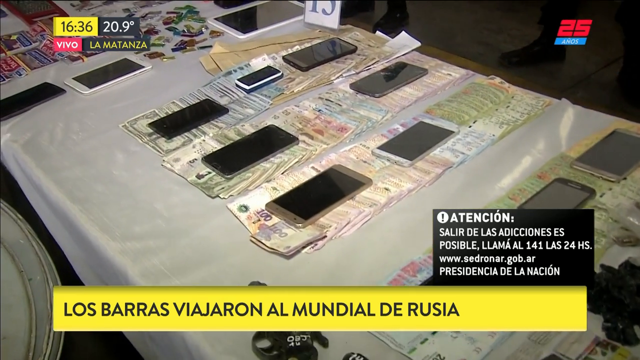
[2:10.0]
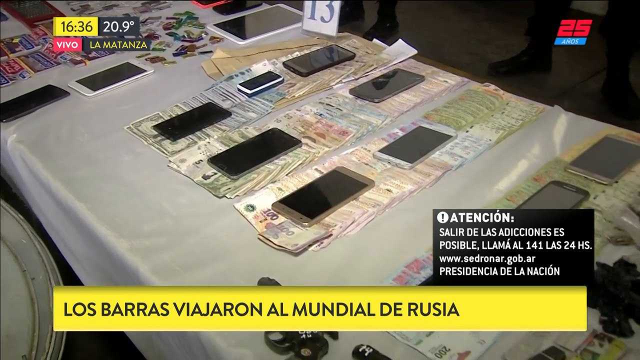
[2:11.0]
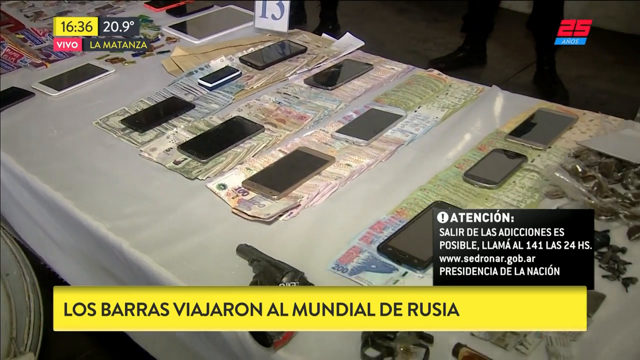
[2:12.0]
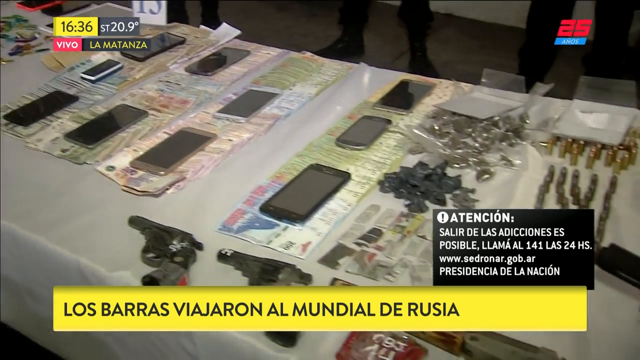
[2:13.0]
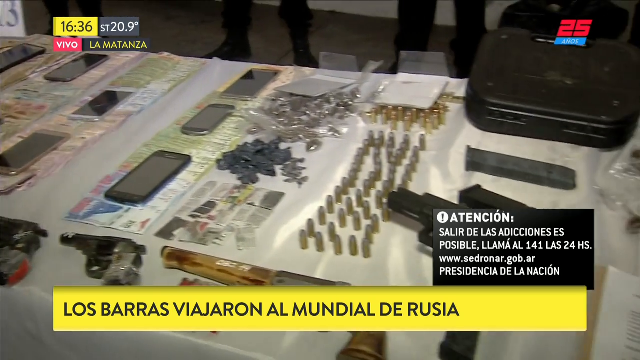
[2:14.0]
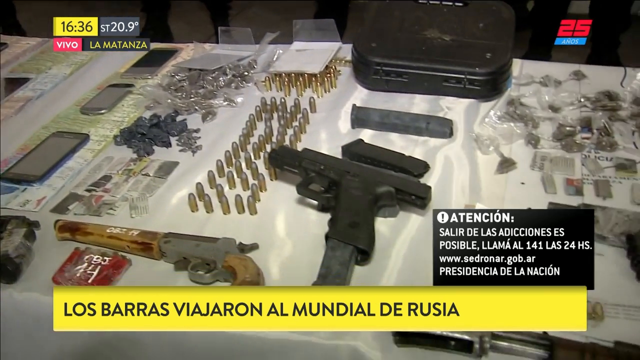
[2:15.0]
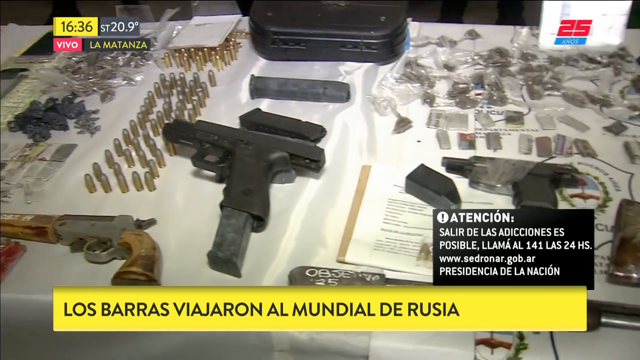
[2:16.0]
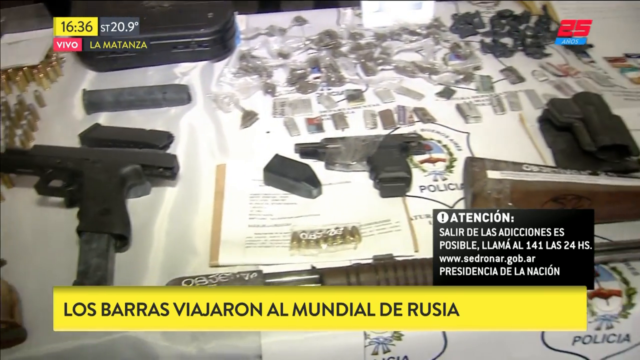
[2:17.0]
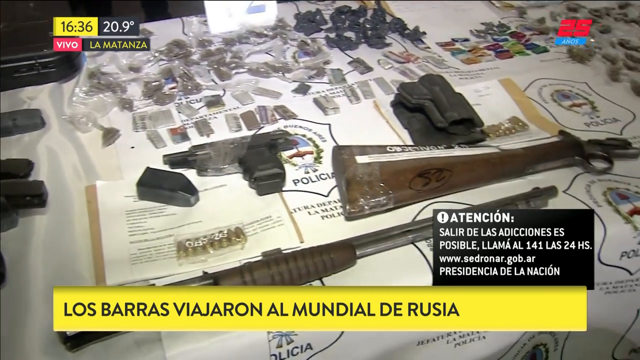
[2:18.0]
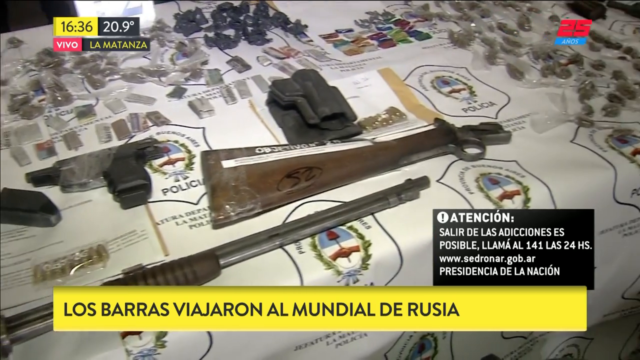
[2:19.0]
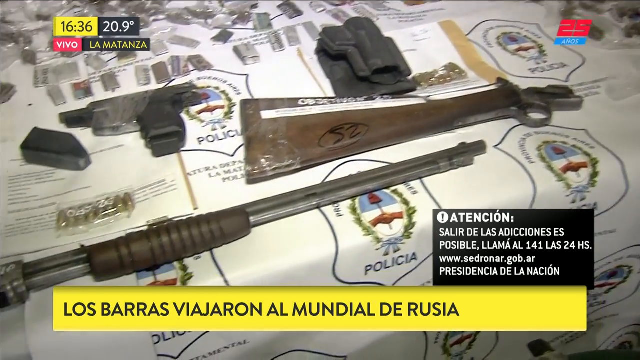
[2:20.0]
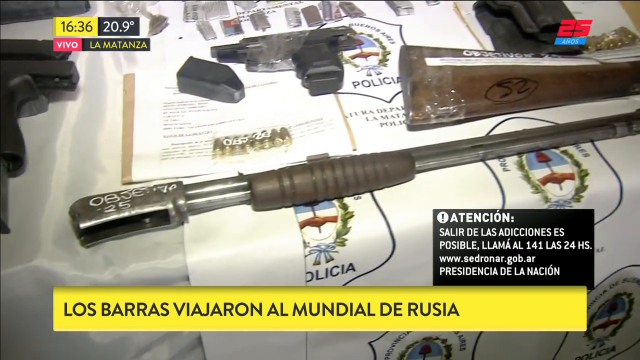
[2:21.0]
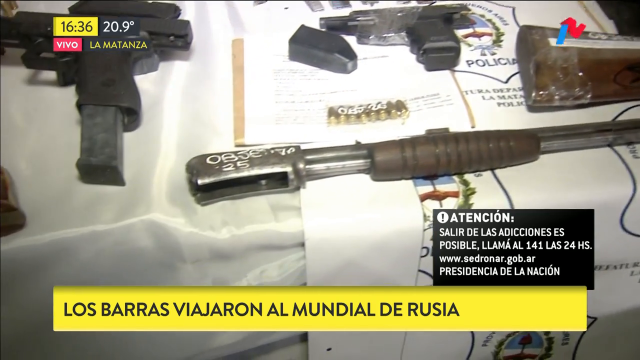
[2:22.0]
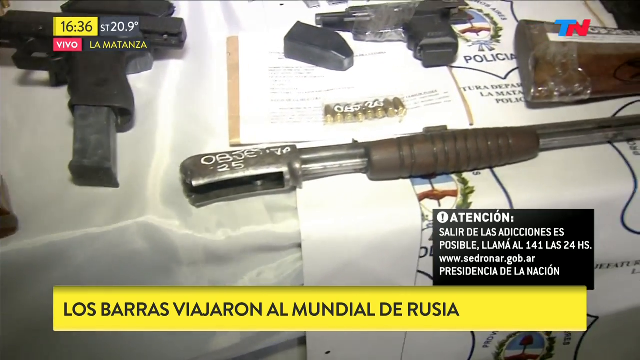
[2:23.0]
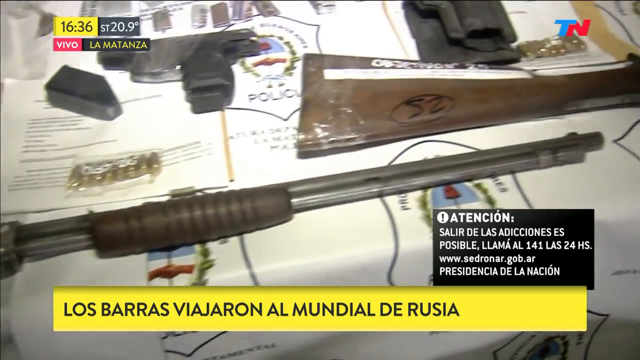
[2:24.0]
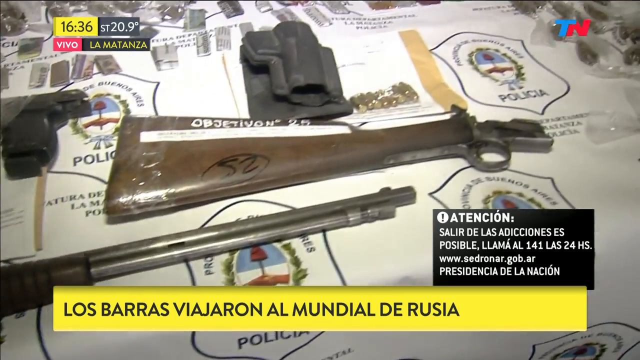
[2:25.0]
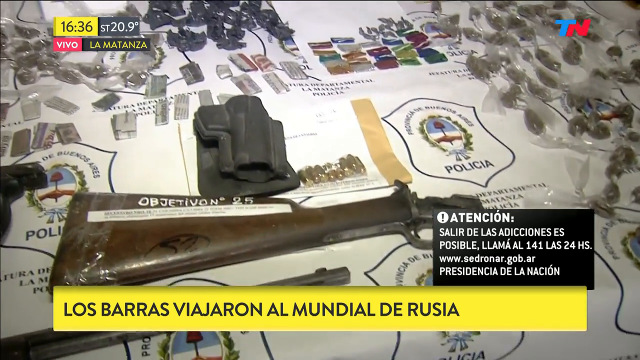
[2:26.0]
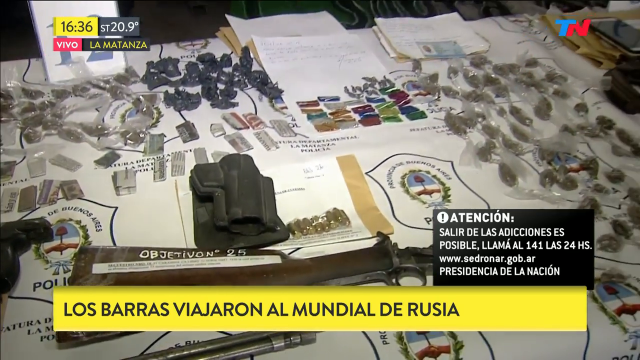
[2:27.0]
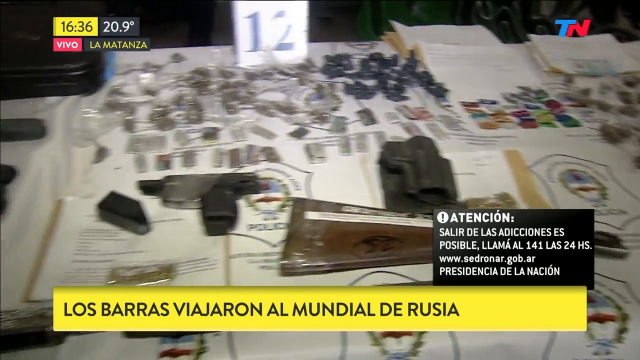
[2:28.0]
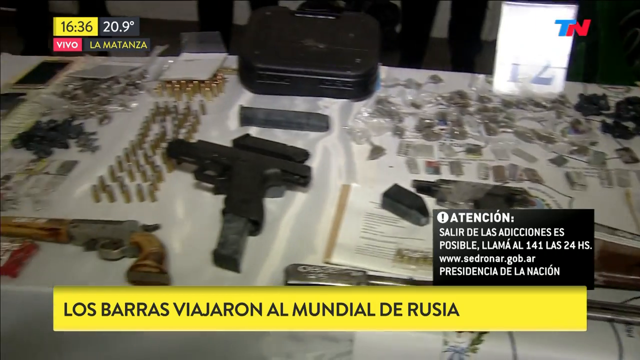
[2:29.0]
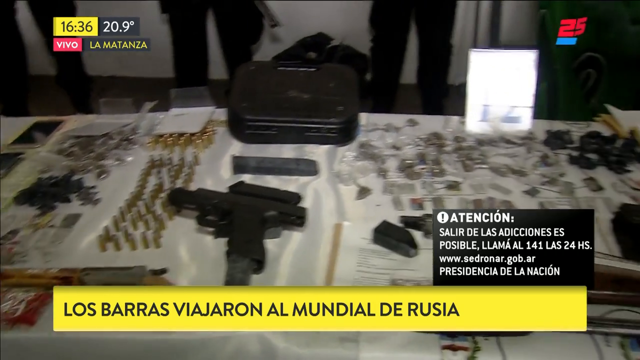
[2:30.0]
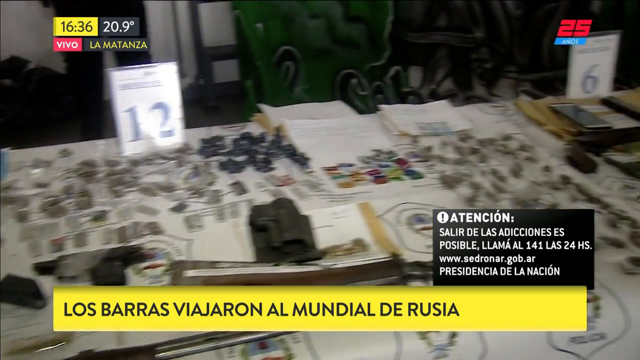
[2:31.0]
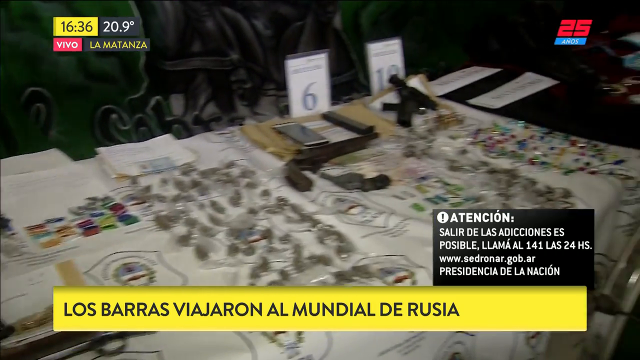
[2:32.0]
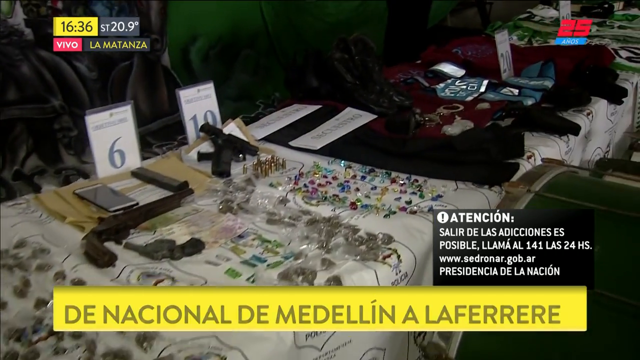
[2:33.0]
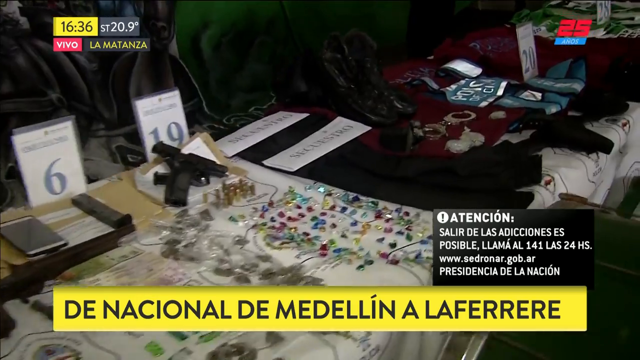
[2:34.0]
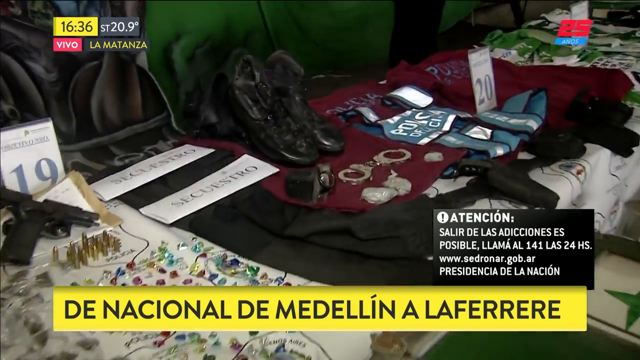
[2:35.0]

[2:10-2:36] The camera shows a closer look at the items on the table, which have been confiscated and are displayed by the authorities. A long wooden rifle lies across a white printed cloth, with a handgun positioned along it, and metallic parts and war-related accessories are spread over the table. There are handsets with money beneath them, and small colorful things that could be jewelry, such as earrings or rings. As the camera moves across the table, many other items appear. The large banner across the bottom of the screen changes its text again, now about weapons and violent crime groups. The warning remains in the corner, and the time and temperature appear as usual.